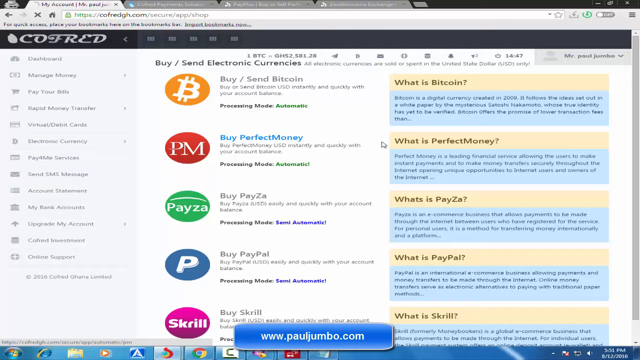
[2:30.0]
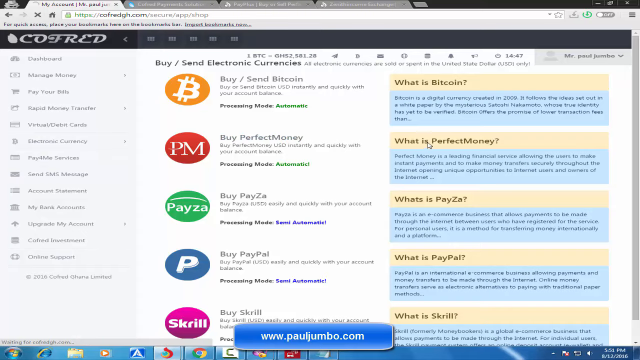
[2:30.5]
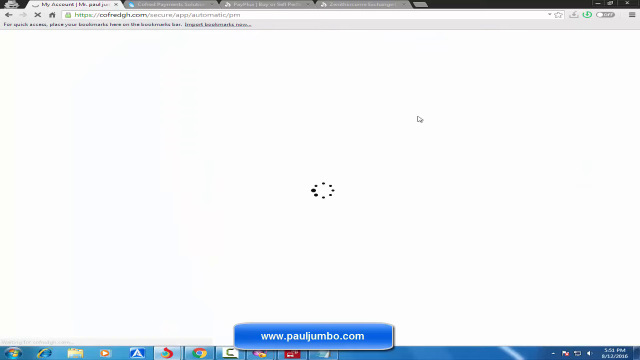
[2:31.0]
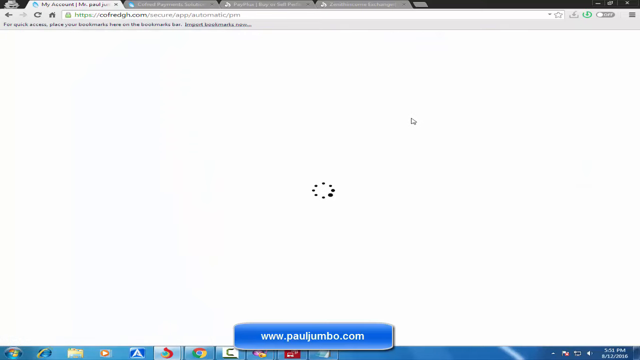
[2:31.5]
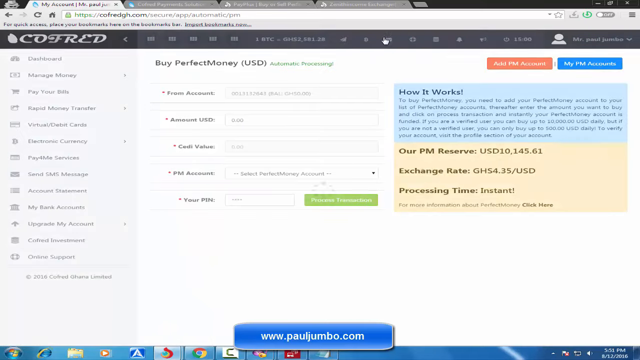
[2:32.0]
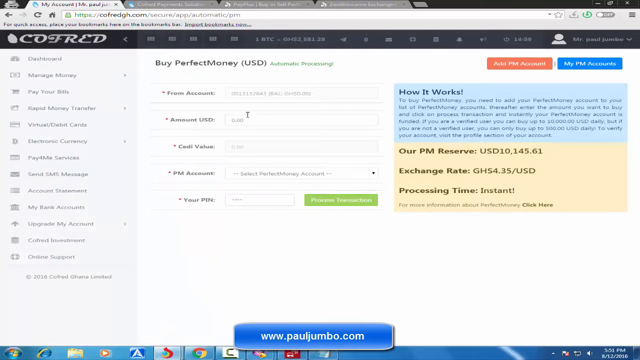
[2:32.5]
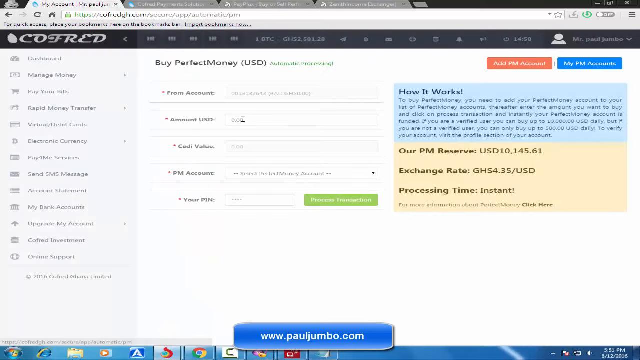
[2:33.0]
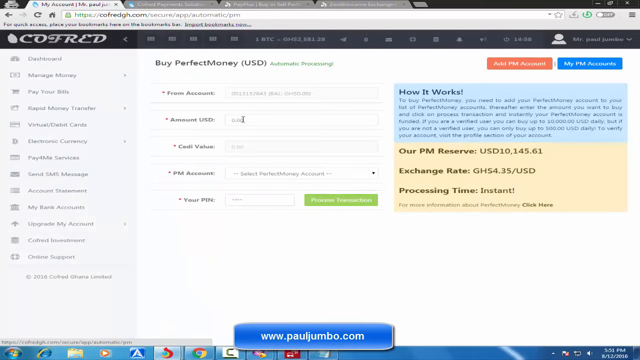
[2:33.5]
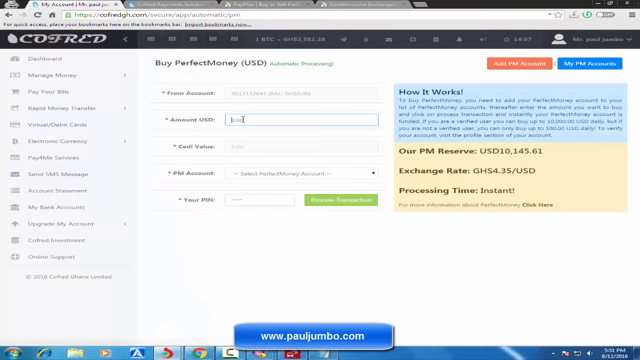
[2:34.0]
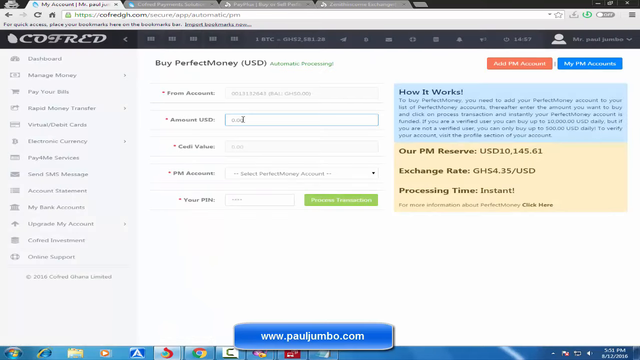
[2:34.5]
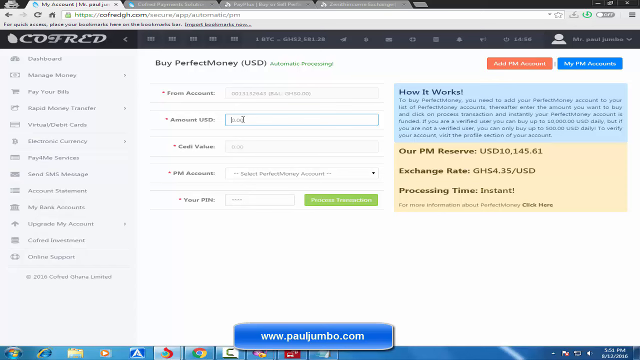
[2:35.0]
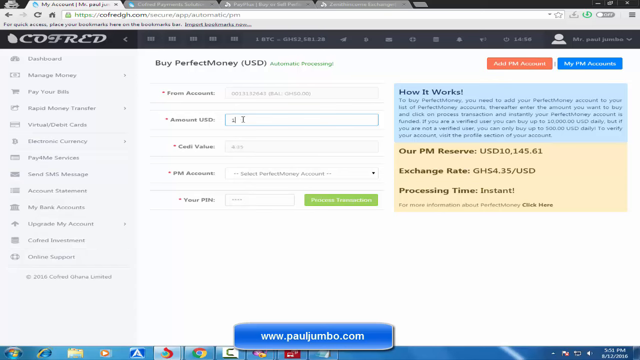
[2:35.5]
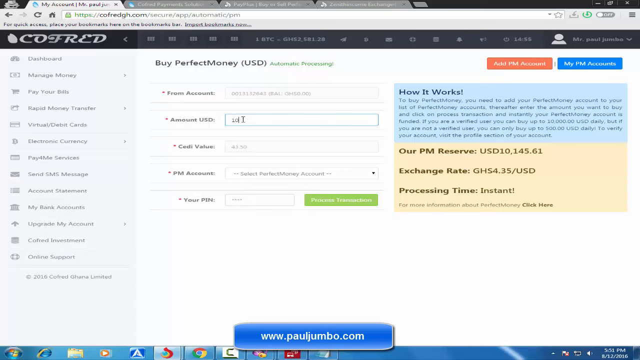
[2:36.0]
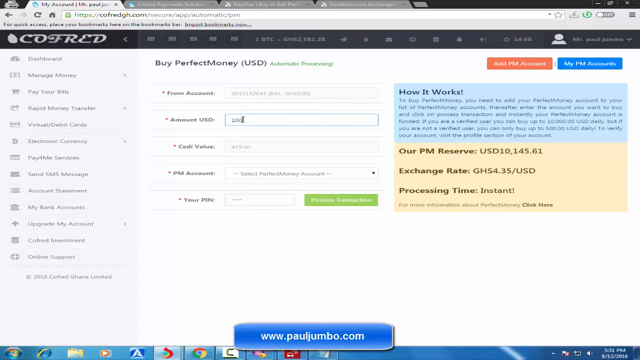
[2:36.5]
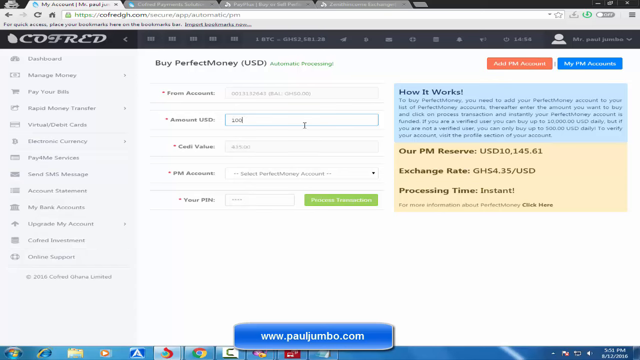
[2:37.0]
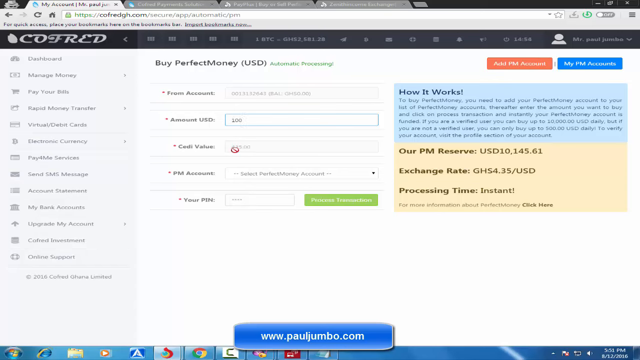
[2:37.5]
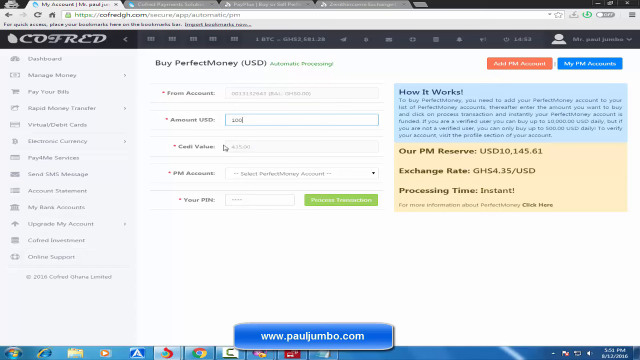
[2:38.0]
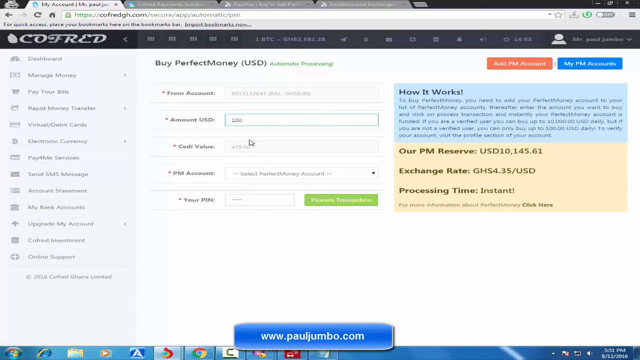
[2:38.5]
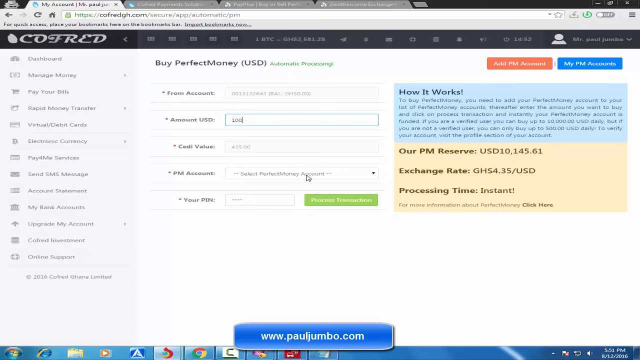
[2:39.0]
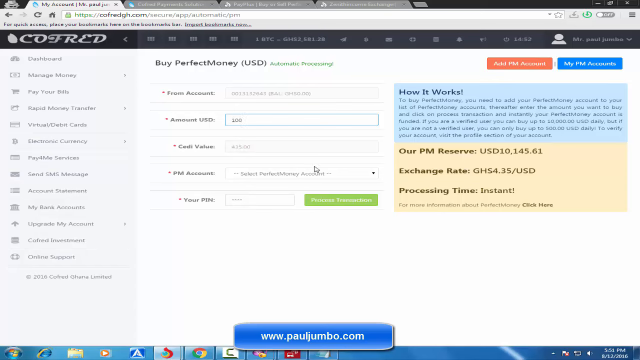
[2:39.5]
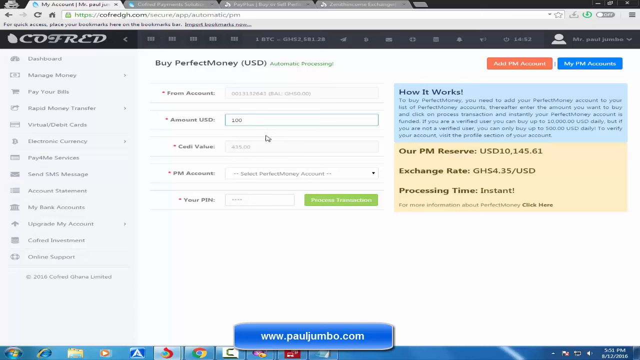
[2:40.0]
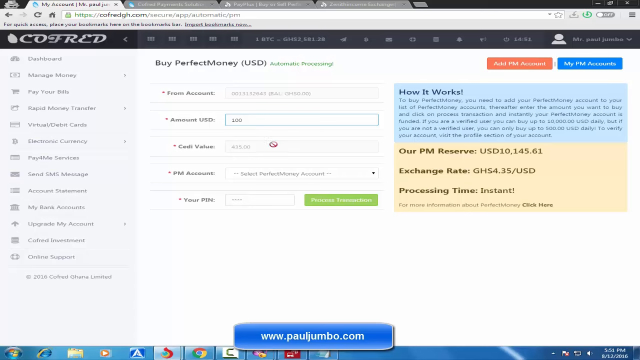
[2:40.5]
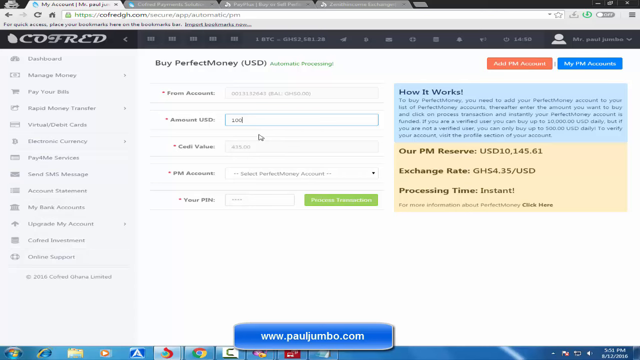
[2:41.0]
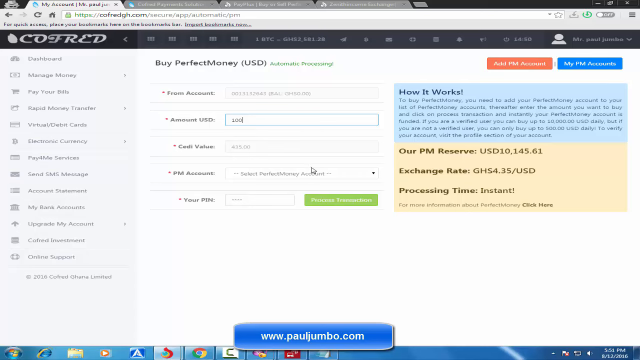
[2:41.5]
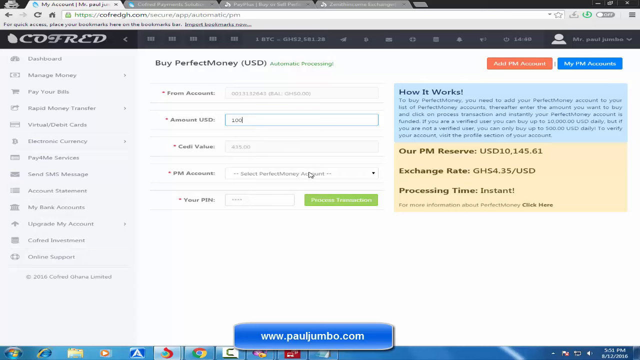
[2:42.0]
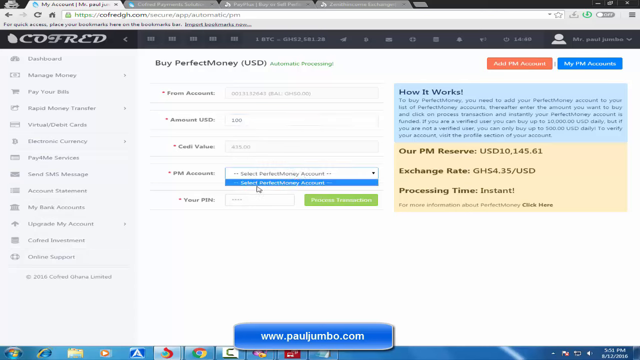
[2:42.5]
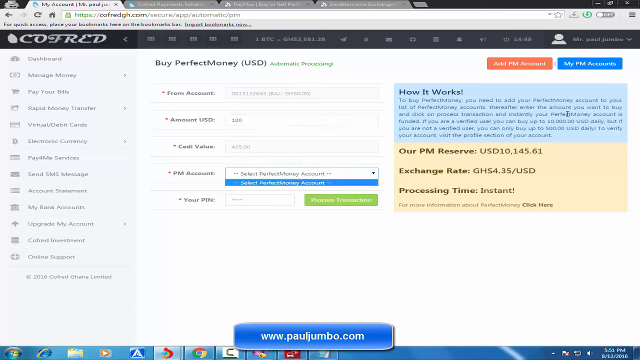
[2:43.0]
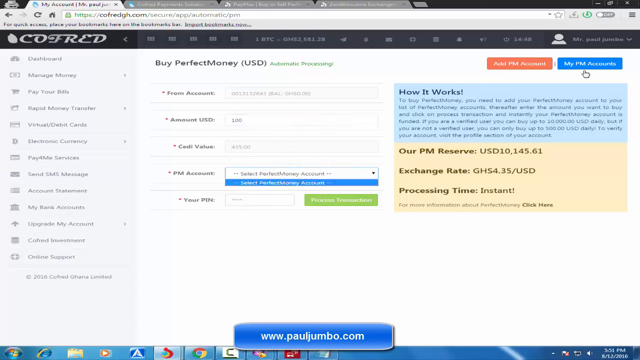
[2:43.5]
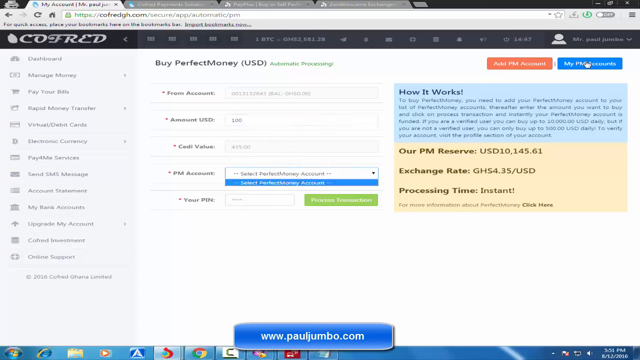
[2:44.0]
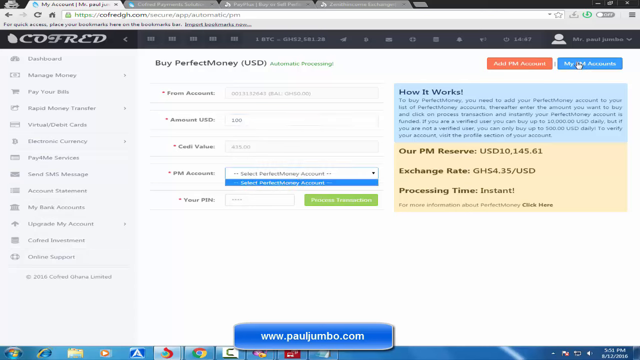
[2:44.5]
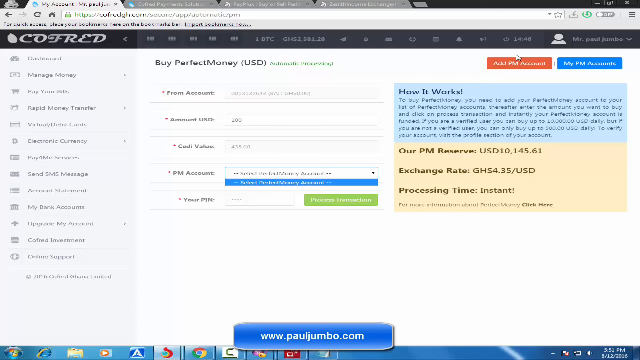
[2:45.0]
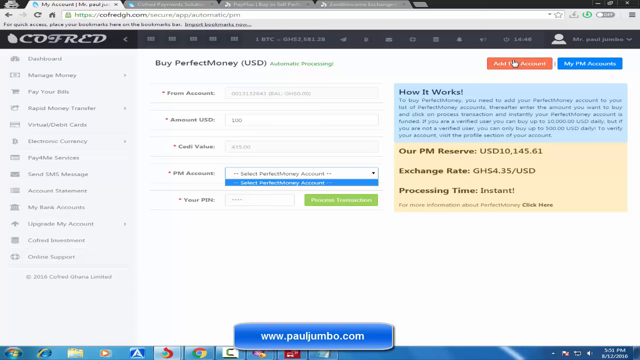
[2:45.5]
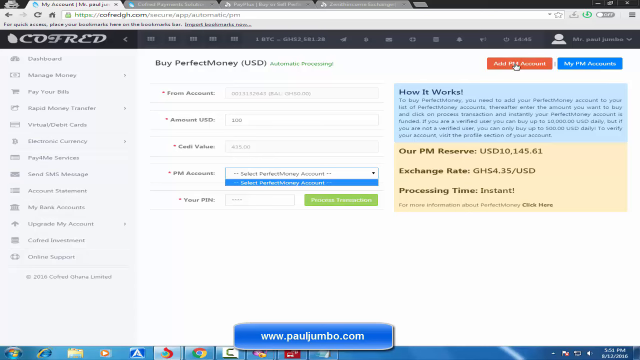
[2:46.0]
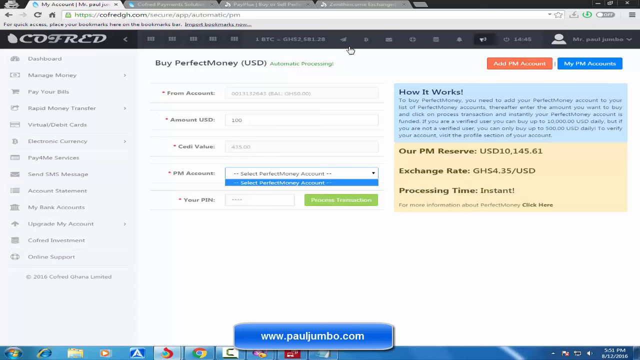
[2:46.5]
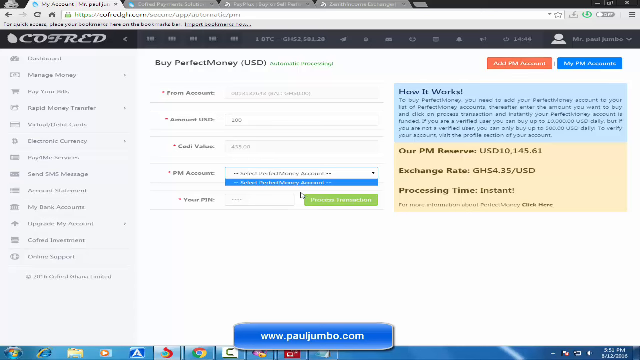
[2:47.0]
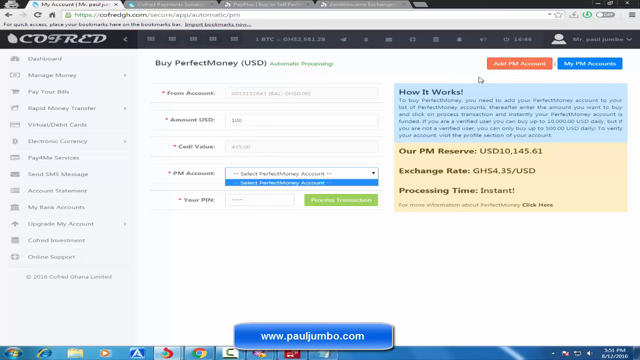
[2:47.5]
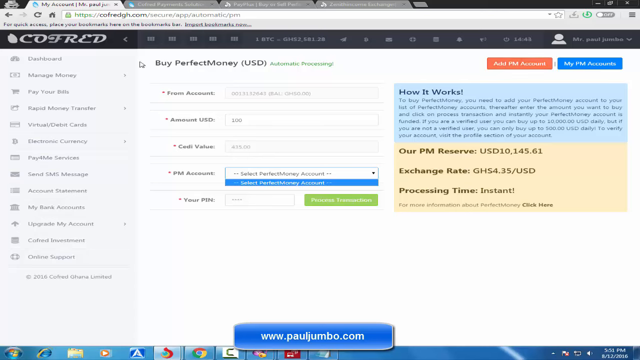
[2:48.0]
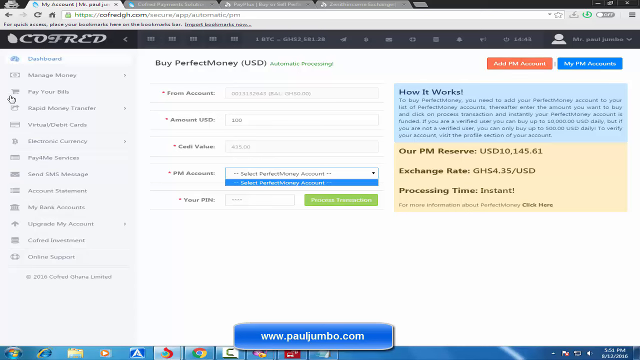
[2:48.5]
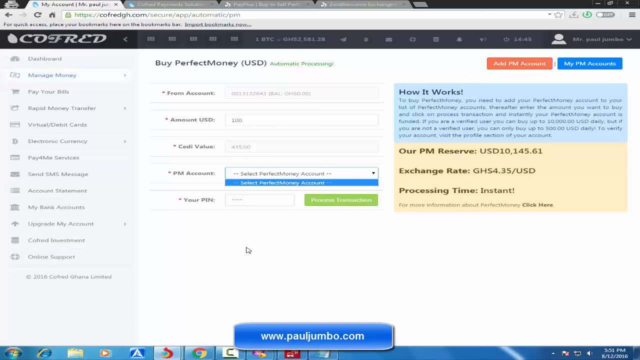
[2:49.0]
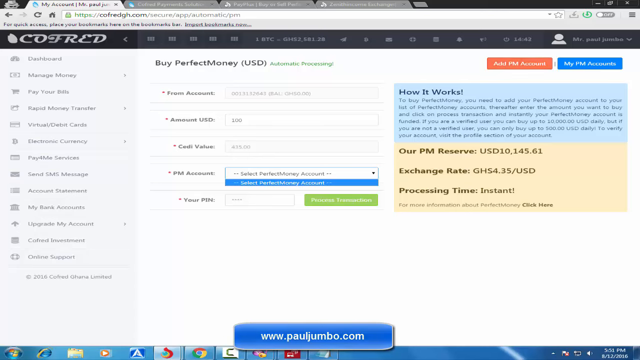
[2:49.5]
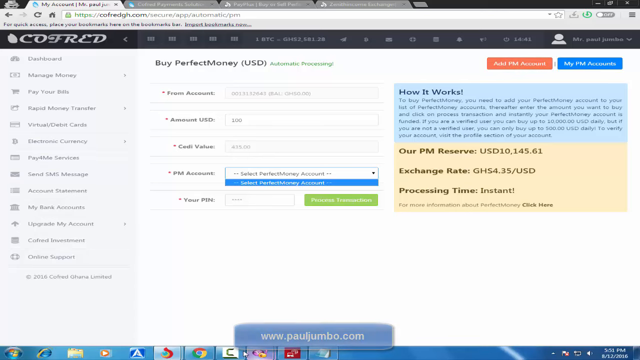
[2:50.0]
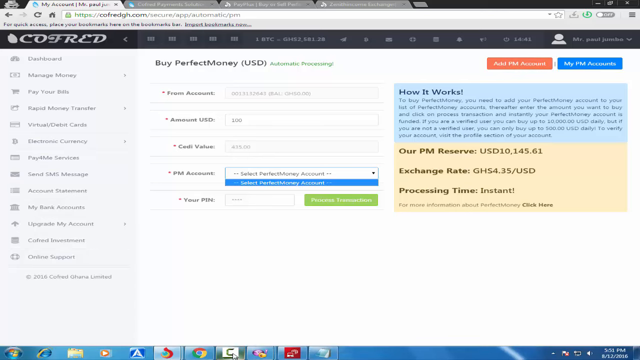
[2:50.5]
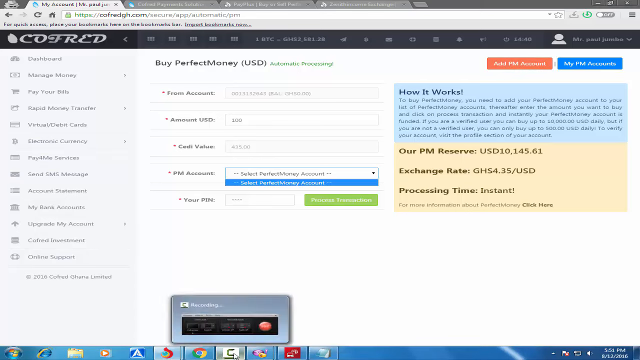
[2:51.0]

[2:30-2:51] A line with three columns is shown. The cursor clicks and the next page opens, with a scrolling area on the left for different views and pages. In the middle it says "buy perfect money (USD)", followed by five fields, each with a red star beside it as if required in order to proceed. The cursor types in the second box. At the bottom is a green rectangle, and over from it a blue area that says "how it works" with six lines of very small writing. Below, it says "our PM reserve (USD)" with 10.145.01, an exchange rate of "GH54.33/USD", and processing time "instant". "How it works" is in blue and "our PM reserve" is in tan. Above that is an orange rectangular box, with a blue rectangular box to the right, directly underneath the silhouette of the person. In the small bar with the web address are four other little icons, the one on the right looking like a toggle that slides on or off.